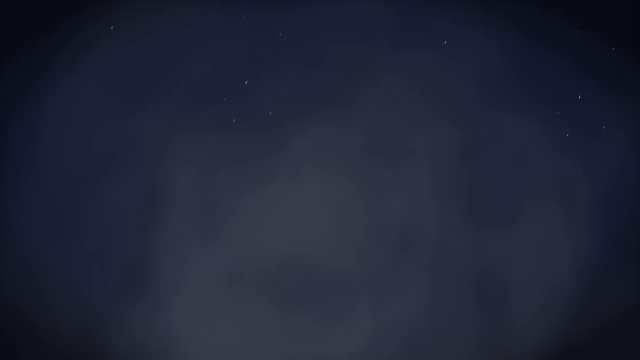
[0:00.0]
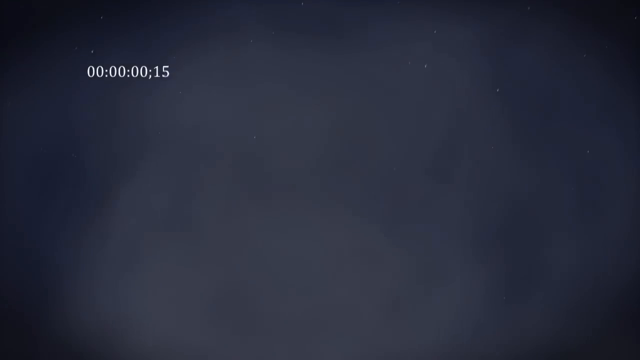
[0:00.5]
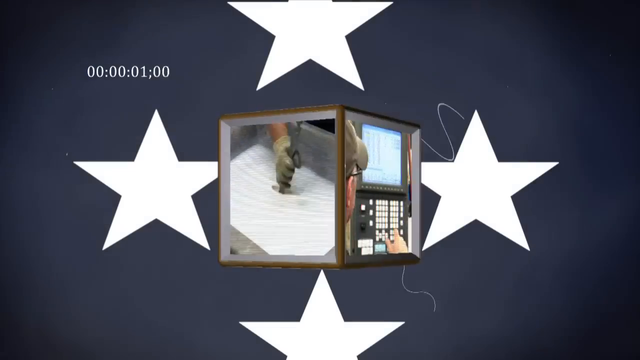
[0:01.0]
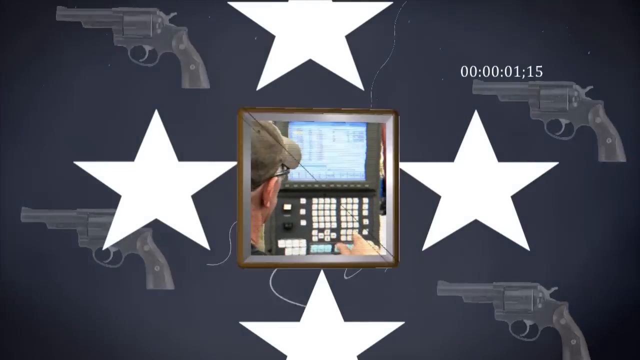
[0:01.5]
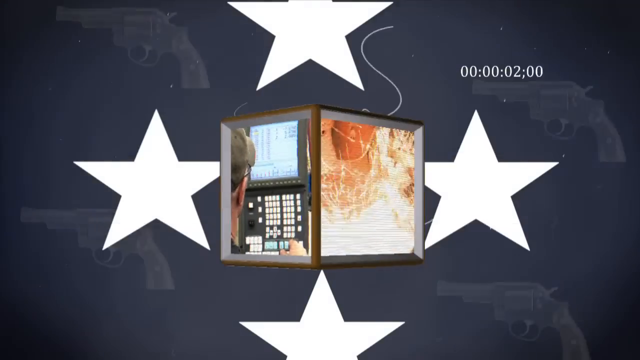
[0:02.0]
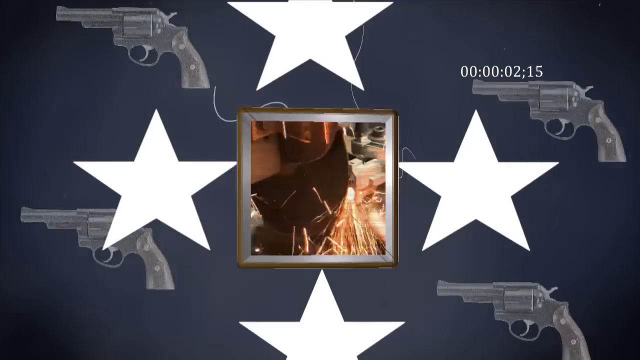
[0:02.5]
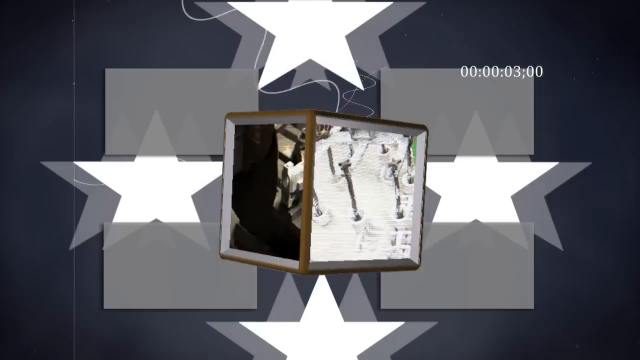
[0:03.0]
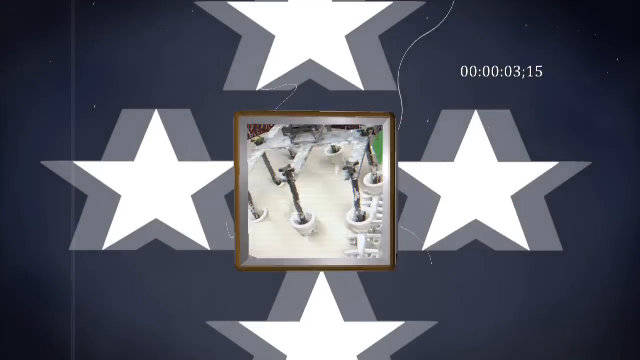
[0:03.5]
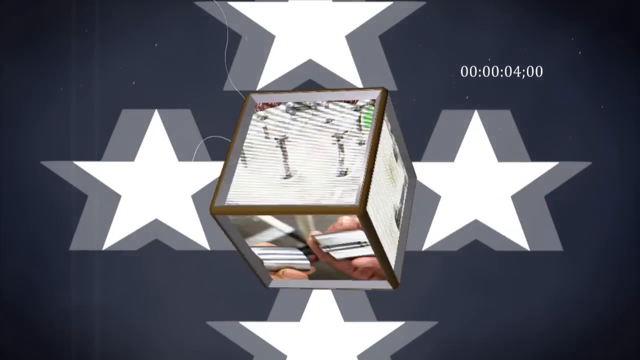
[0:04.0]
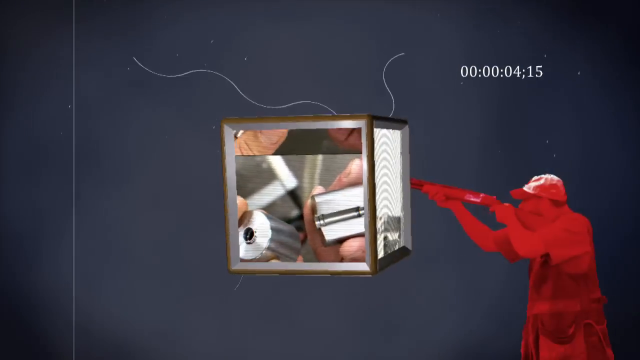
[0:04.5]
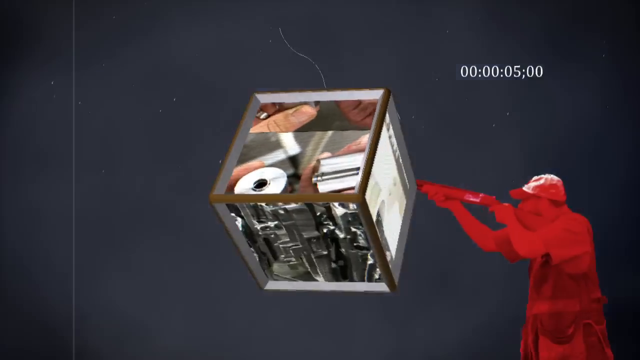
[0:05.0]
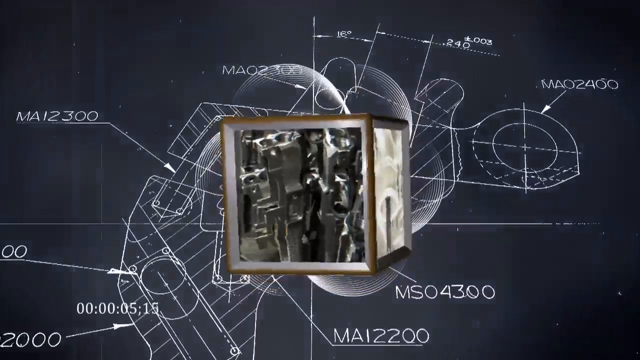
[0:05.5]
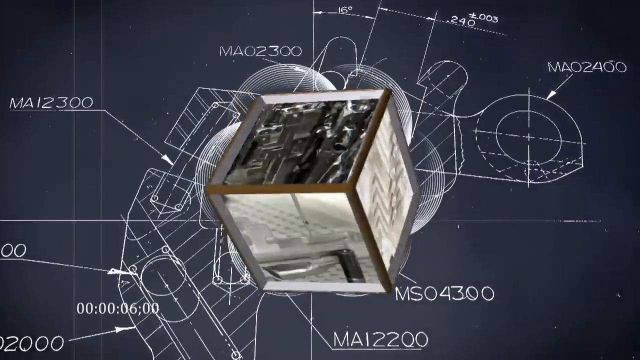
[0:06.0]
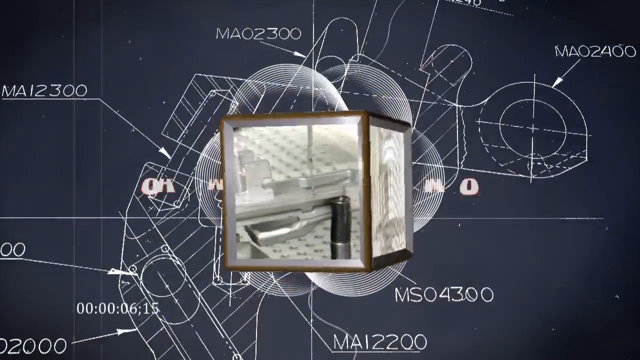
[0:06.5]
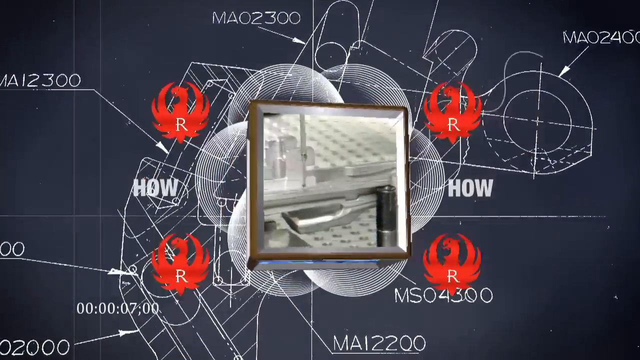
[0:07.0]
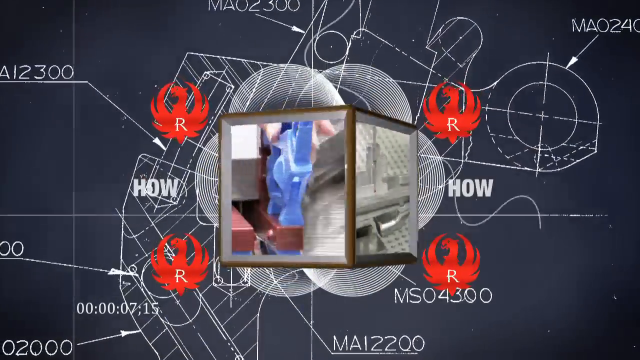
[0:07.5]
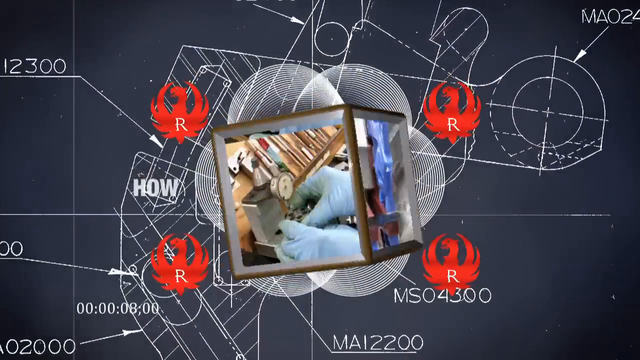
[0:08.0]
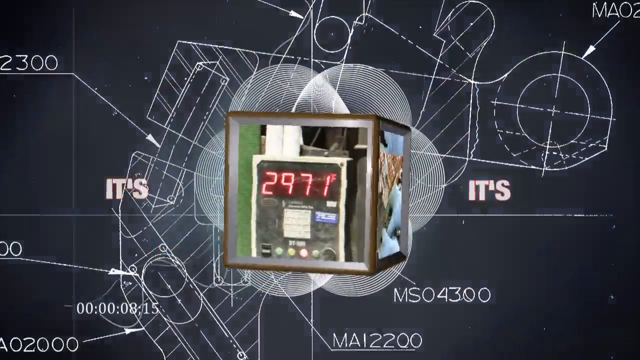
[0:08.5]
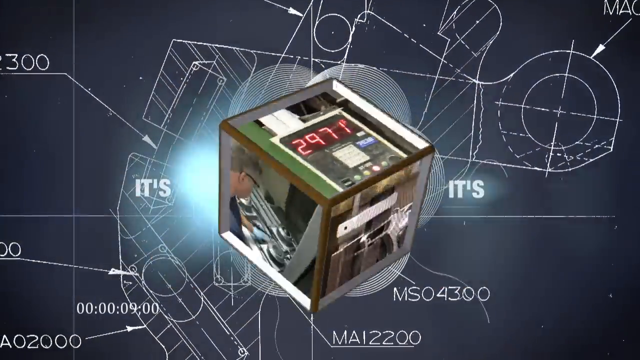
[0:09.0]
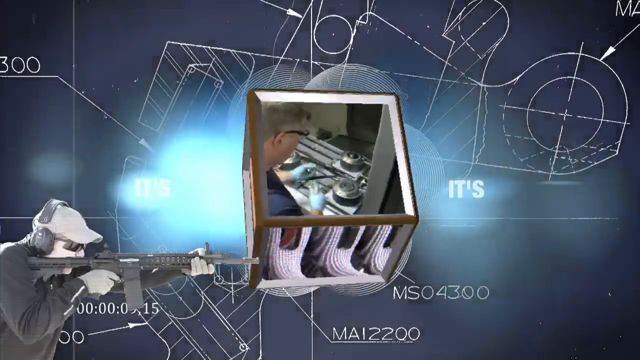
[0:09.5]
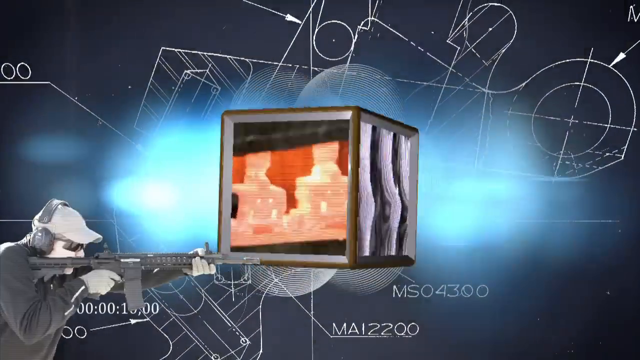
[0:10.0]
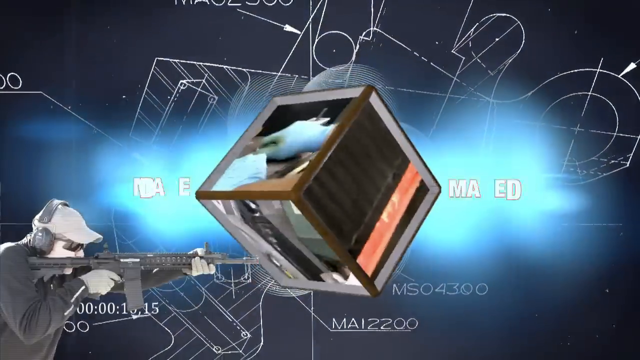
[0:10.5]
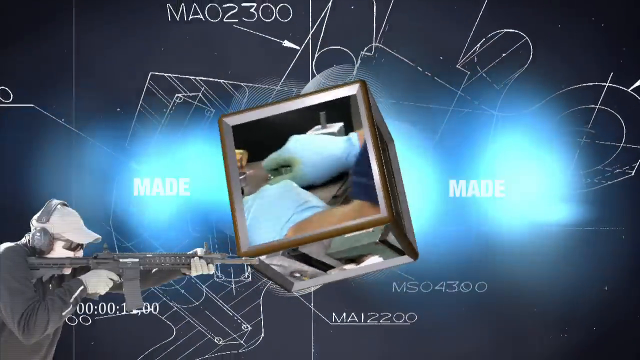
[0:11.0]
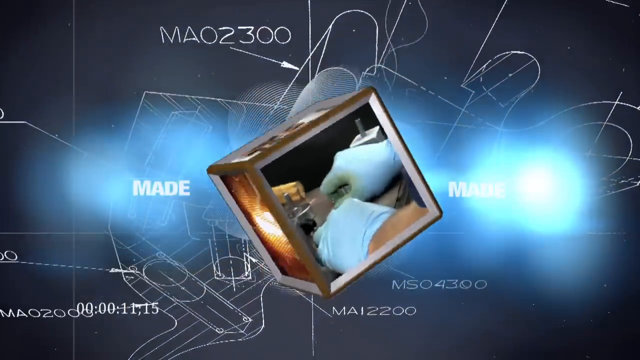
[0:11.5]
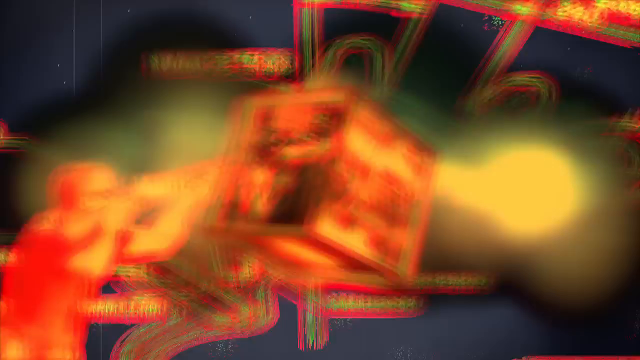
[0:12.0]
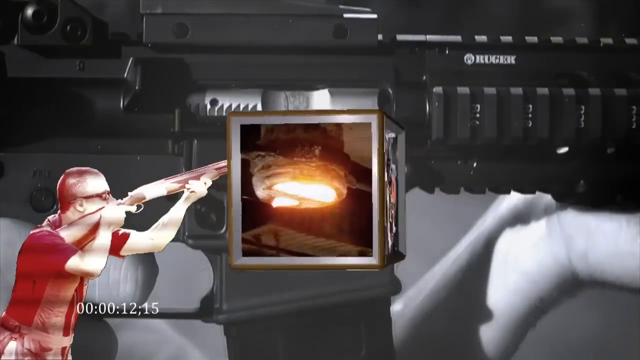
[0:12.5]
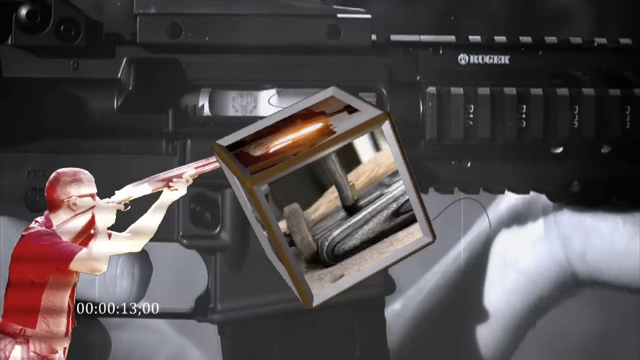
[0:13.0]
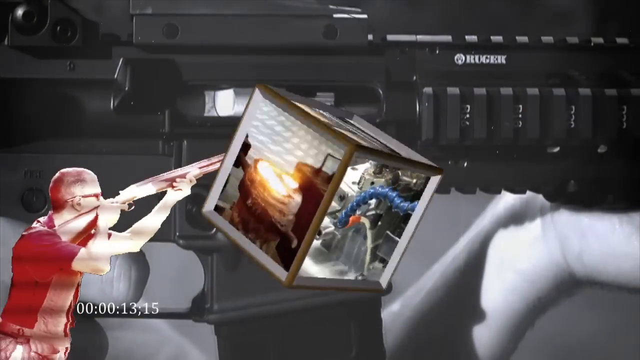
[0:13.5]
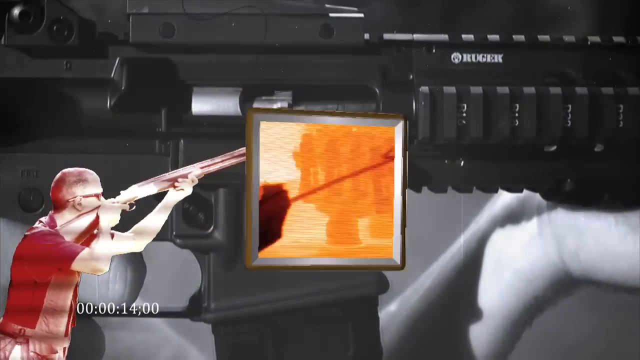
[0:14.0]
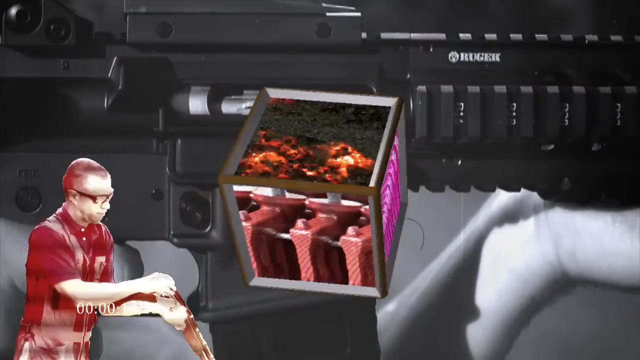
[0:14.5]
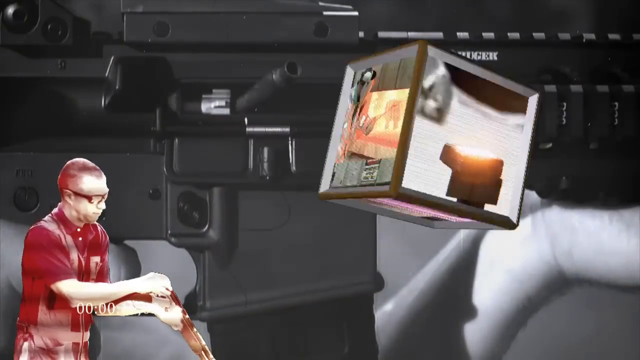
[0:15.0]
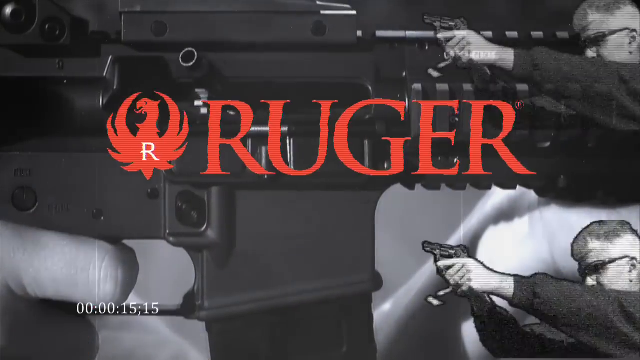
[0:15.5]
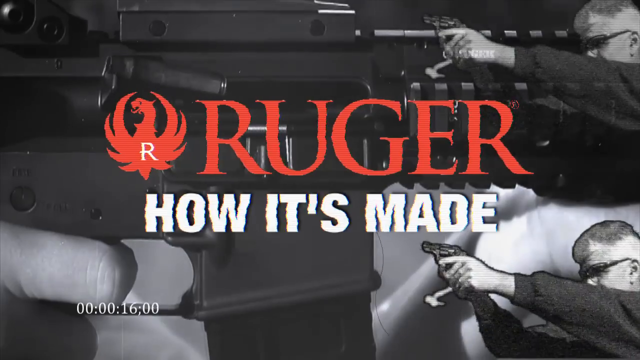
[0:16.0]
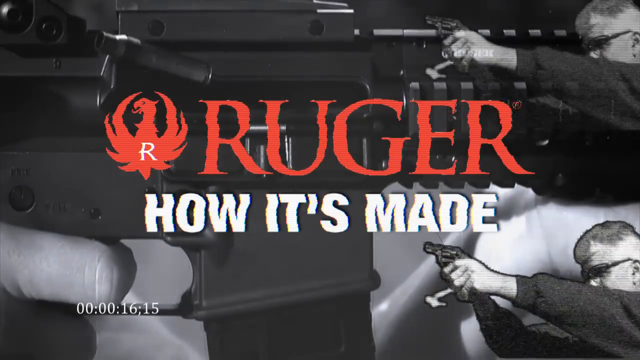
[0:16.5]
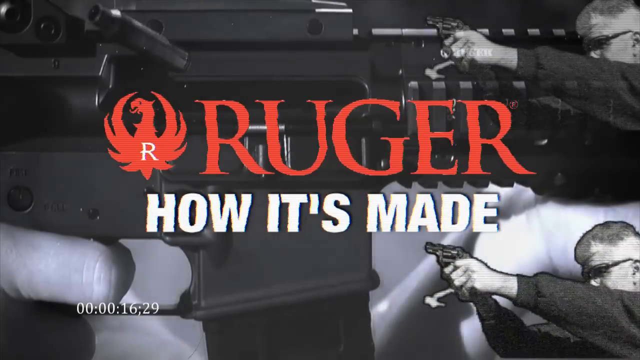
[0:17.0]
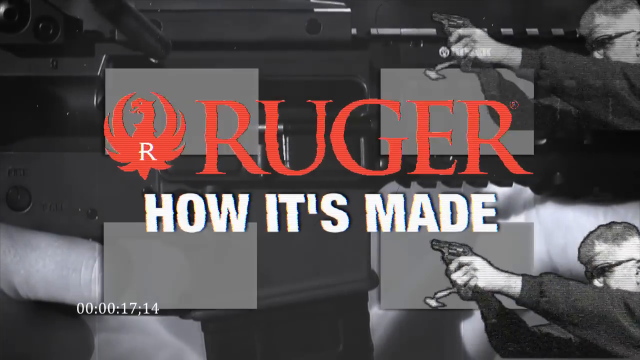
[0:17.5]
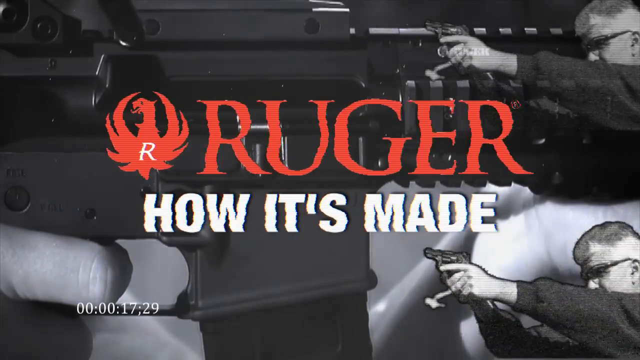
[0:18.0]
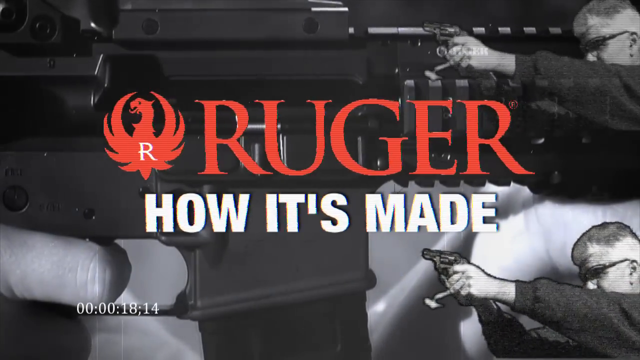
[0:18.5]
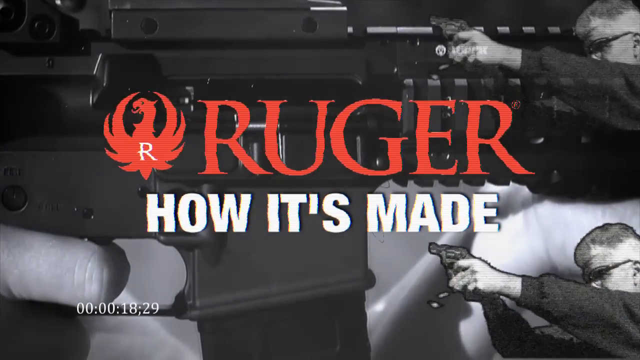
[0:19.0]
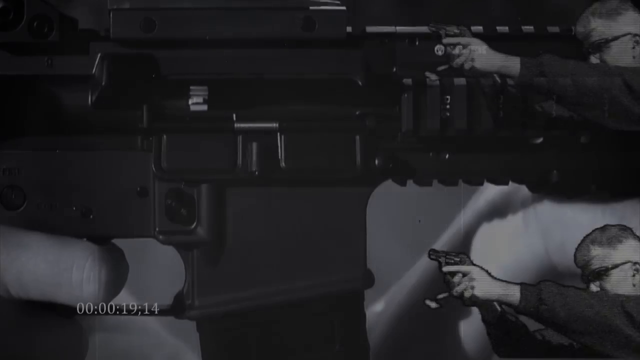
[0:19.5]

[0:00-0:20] This is a video by Ruger Firearms, and it seems to be the introduction to another video. A spinning cube in the middle of the screen displays "Ruger, how it's made" along with pictures: people shooting guns, a man sitting at a computer, a steel foundry, and other images on the rotating cube. The imagery goes from black and white to color. Four stars appear, along with schematic drawings of a handgun, and the sequence ends with "Ruger, how it's made."